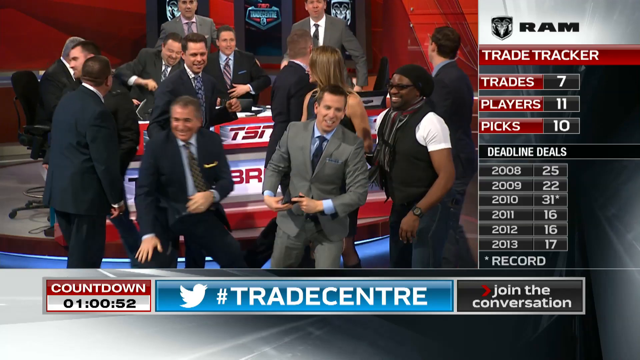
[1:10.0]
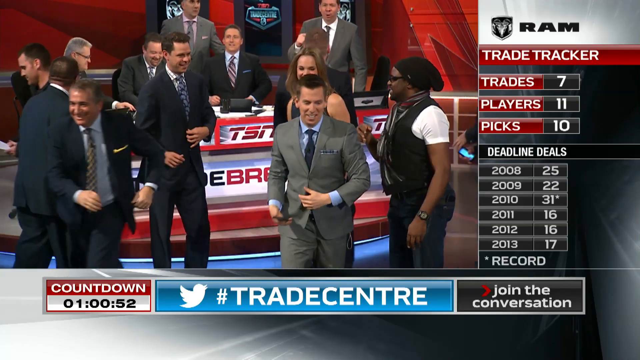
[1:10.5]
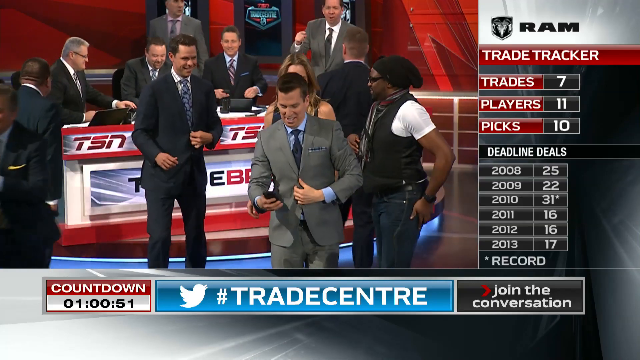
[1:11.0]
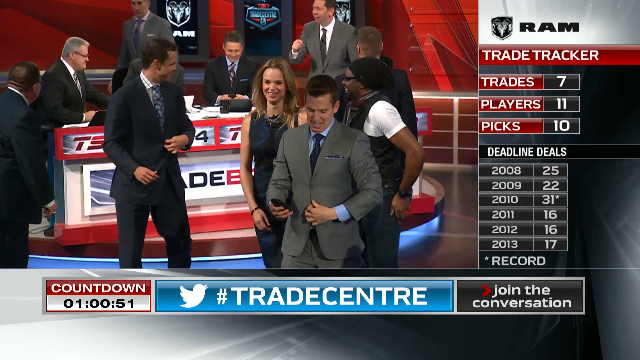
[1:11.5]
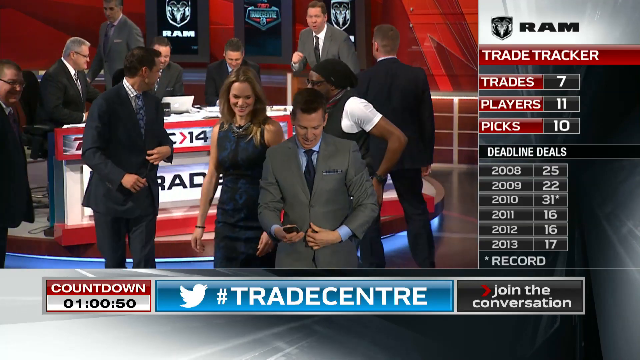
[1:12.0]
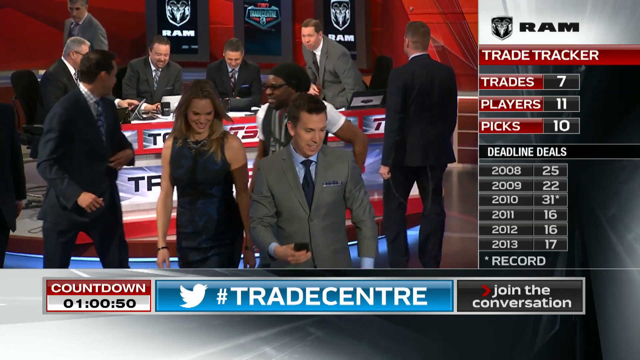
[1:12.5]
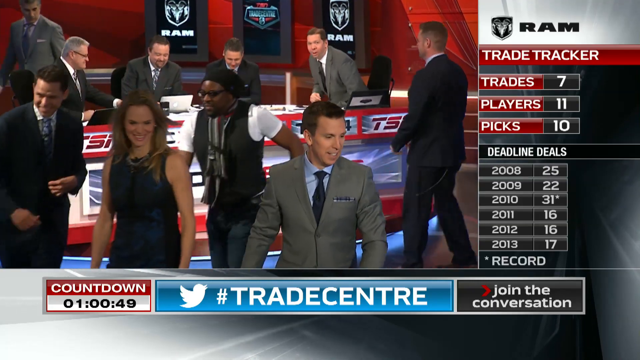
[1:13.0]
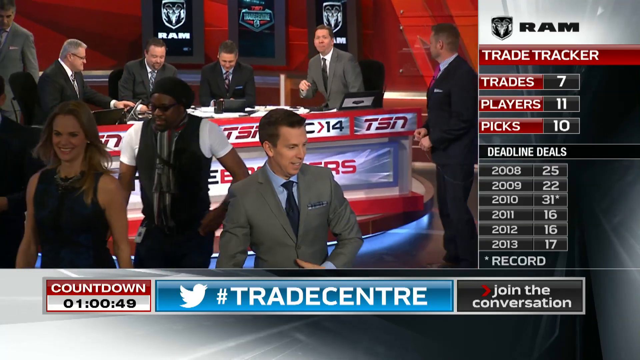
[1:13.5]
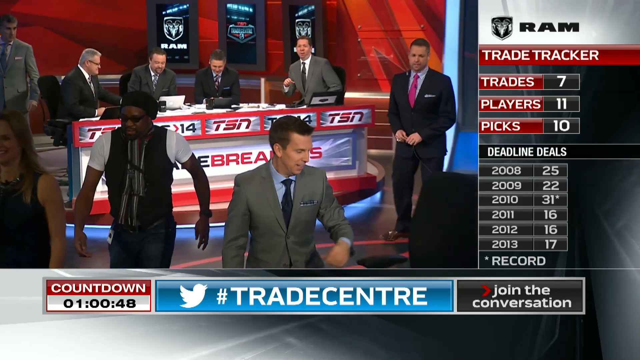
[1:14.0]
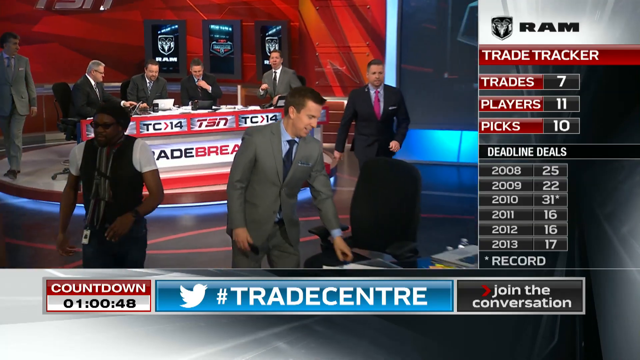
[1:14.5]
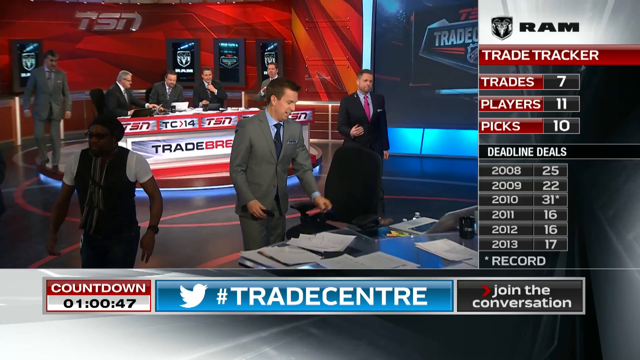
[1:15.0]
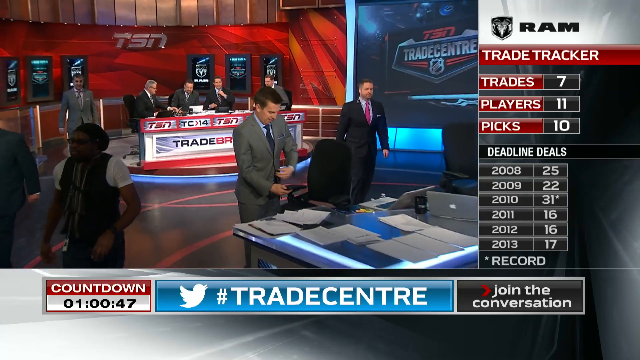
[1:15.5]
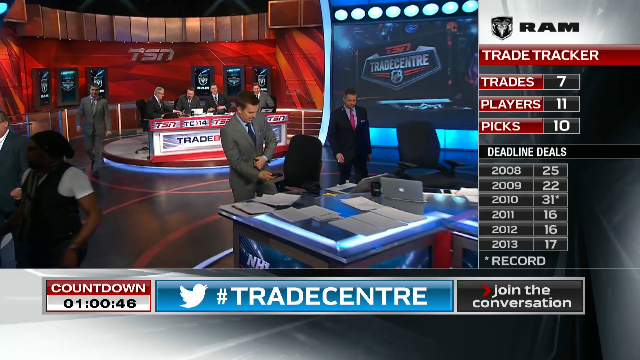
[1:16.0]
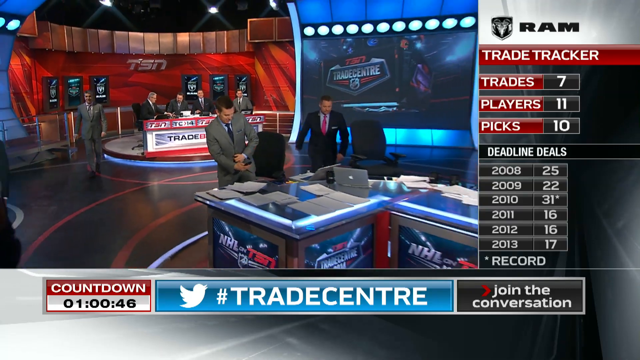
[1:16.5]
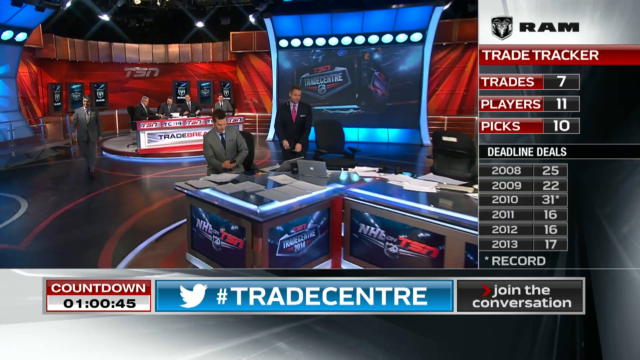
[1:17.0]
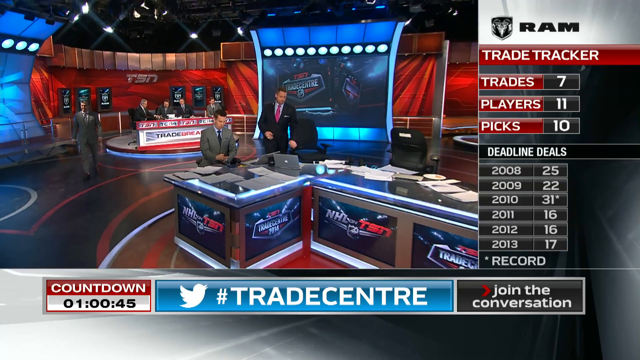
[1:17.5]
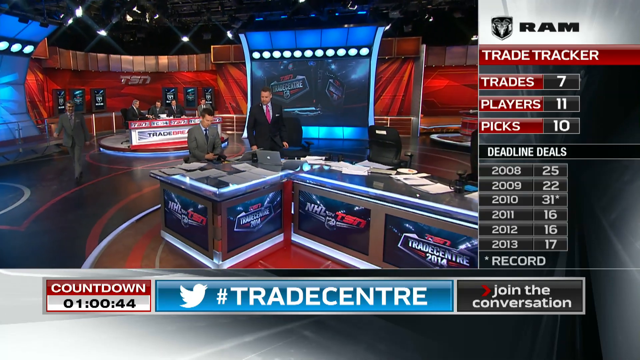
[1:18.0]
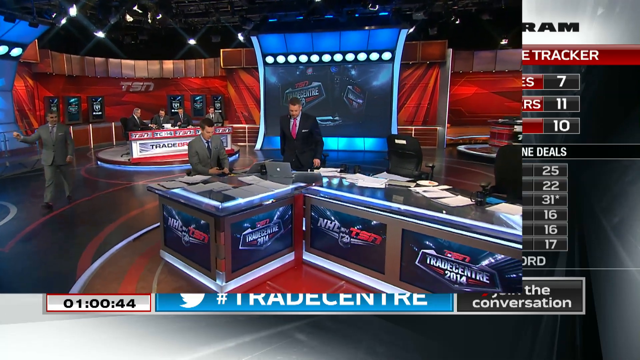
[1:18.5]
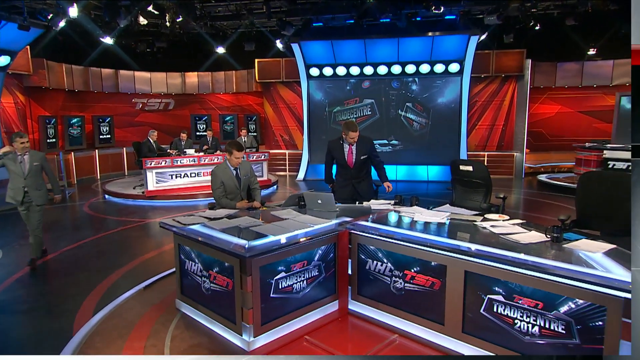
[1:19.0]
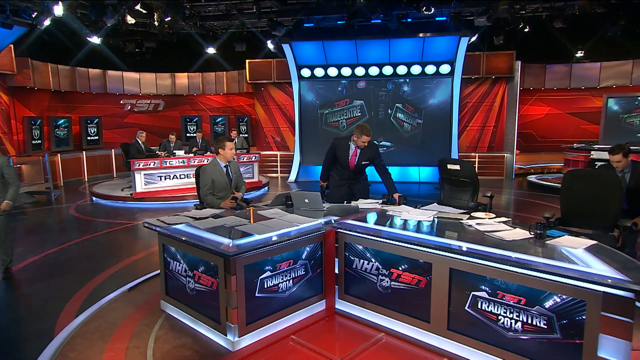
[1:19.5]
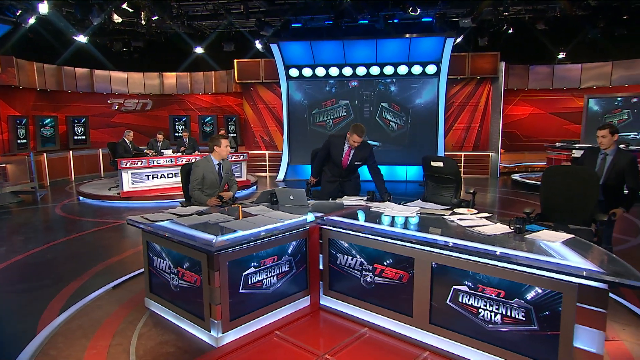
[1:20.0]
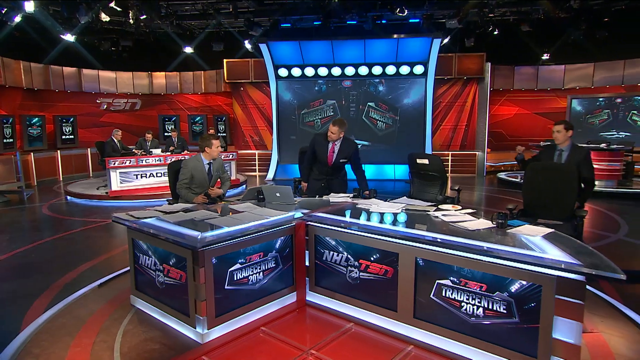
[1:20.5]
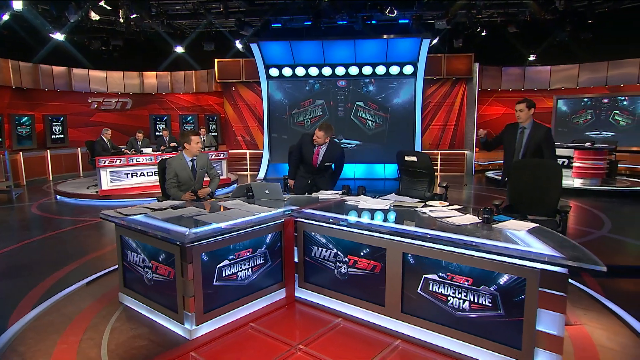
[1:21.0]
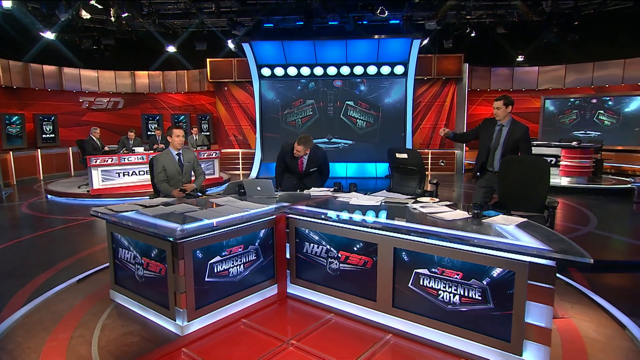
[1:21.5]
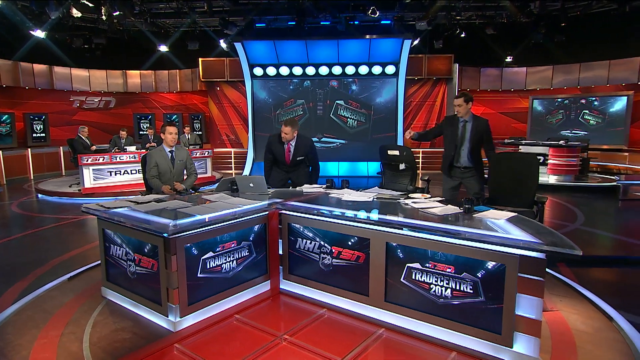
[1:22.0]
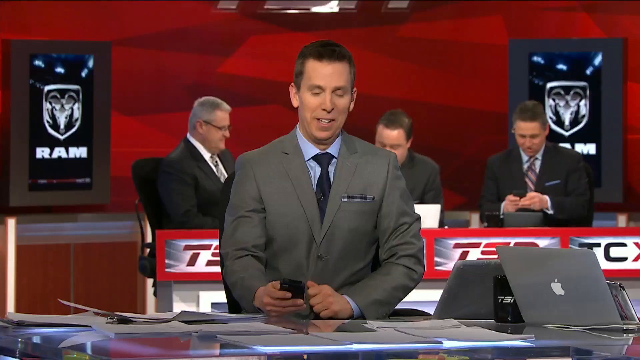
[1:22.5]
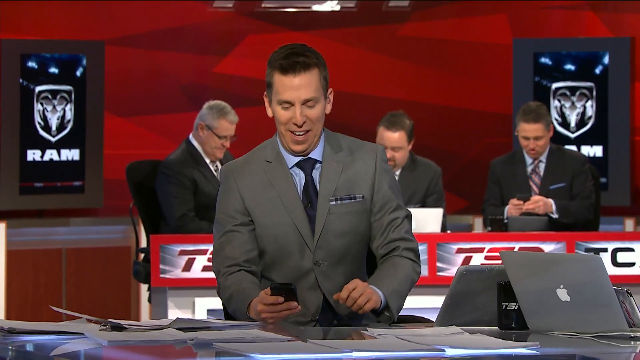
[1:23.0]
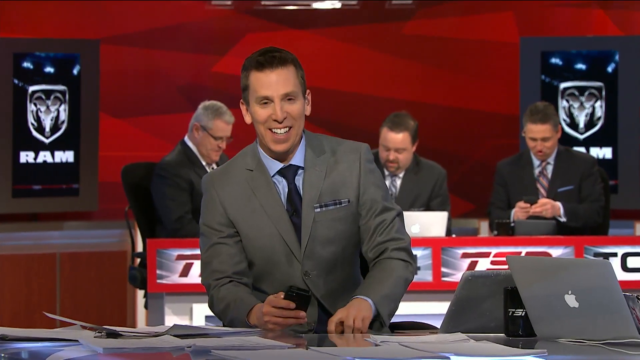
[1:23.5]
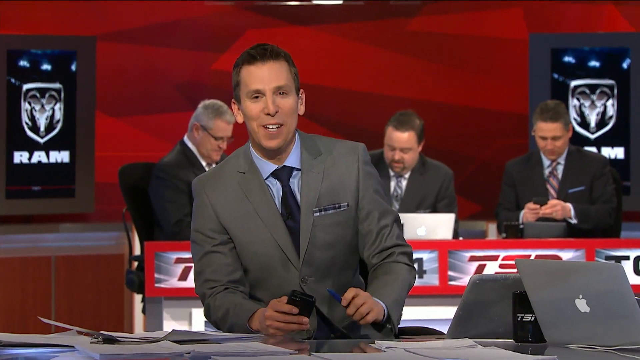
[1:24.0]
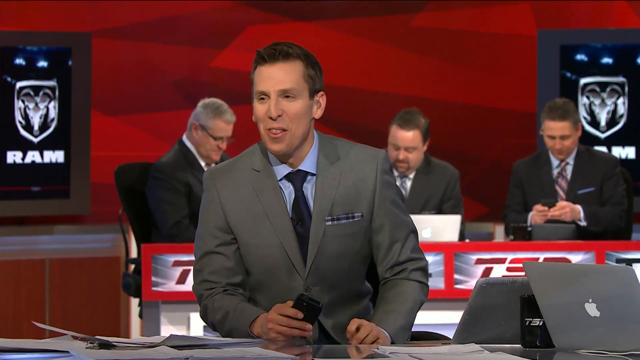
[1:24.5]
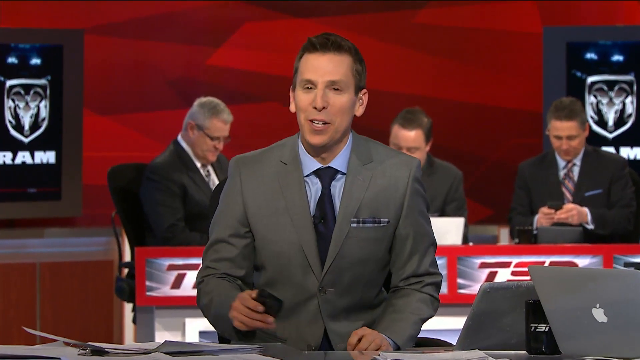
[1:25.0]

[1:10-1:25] After the group selfie in the center of the floor, everybody kind of disperses, walking away in different directions. The newscaster, in a gray suit, comes back to the desk and sits down, and he is joined by two other people in dark-colored suits. The camera then centers back on the man in the gray suit as he sits at the desk, and he eventually looks over to his right. Other newscasters are in the background behind him, and on the back wall, to the right and the left, is the Ram logo, the logo of the Dodge Ram brand. The front of the desk reads "NHL Trade Center 2014," indicating the studio is covering the 2014 NHL draft.